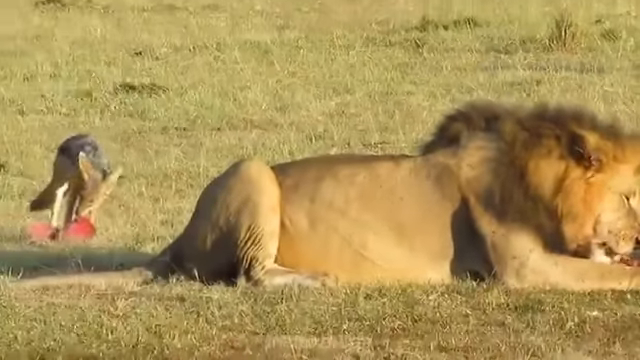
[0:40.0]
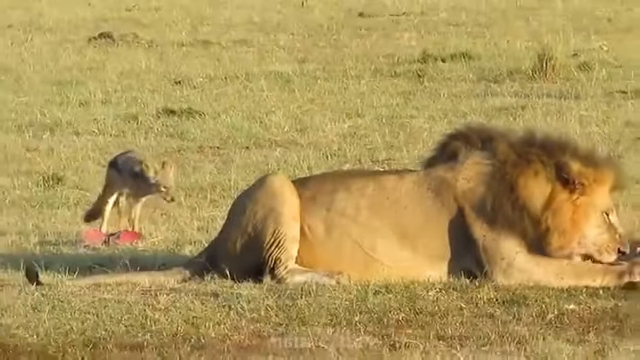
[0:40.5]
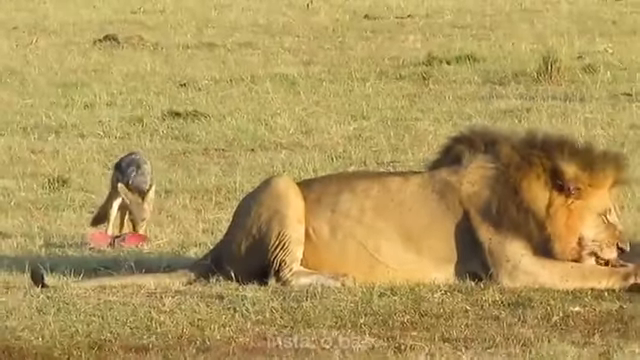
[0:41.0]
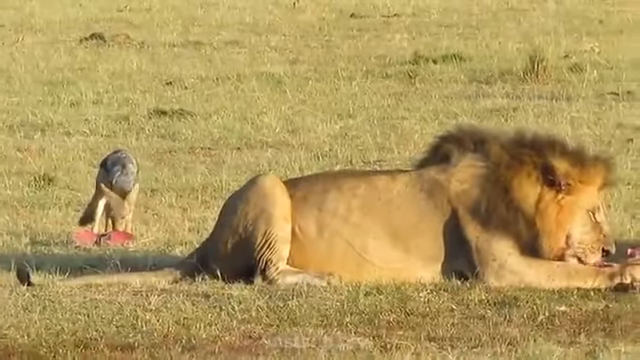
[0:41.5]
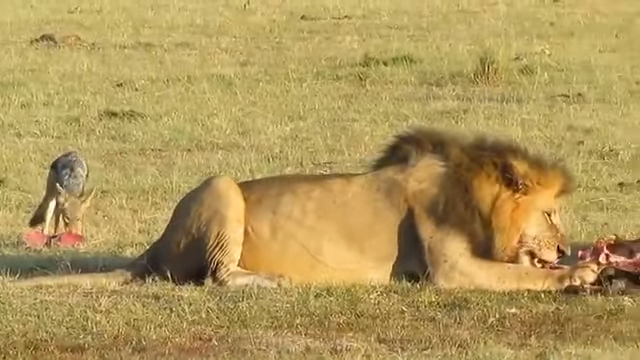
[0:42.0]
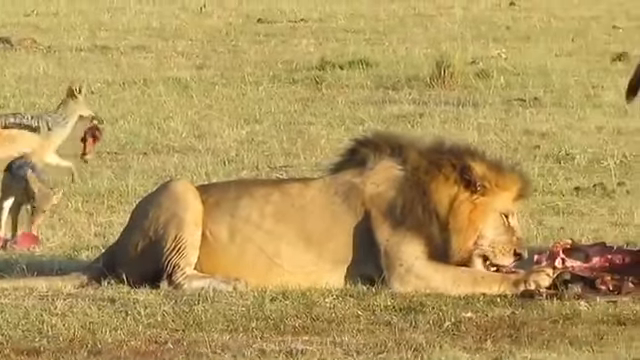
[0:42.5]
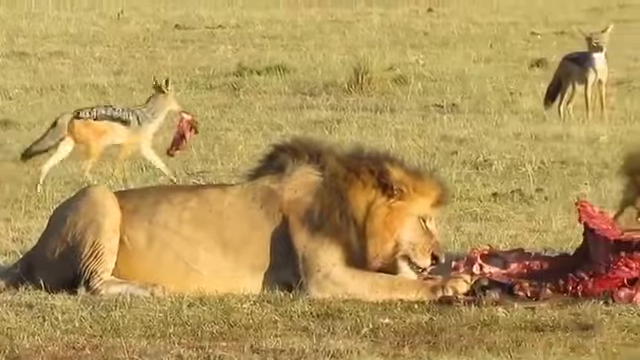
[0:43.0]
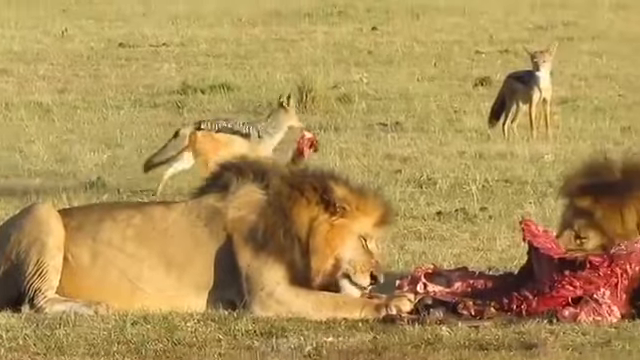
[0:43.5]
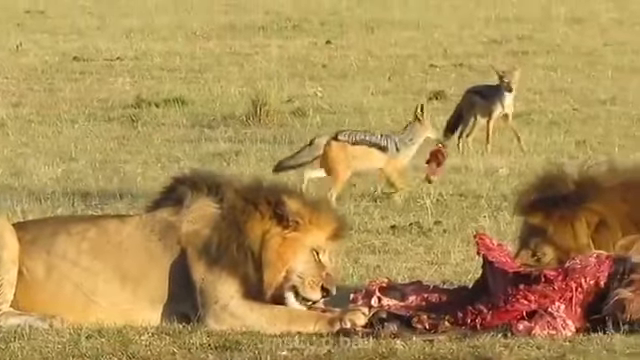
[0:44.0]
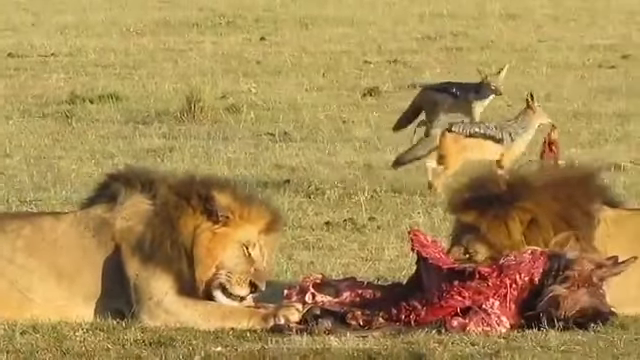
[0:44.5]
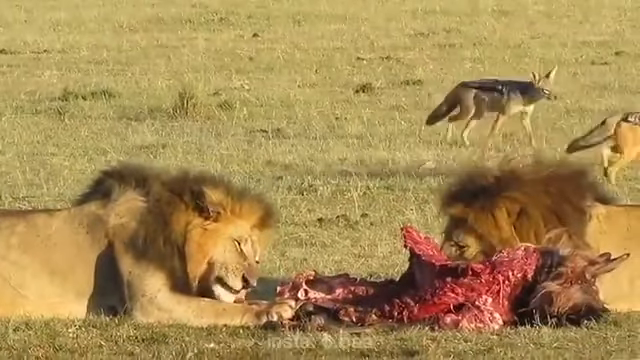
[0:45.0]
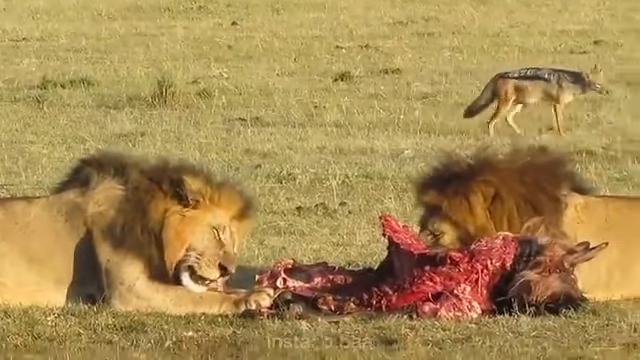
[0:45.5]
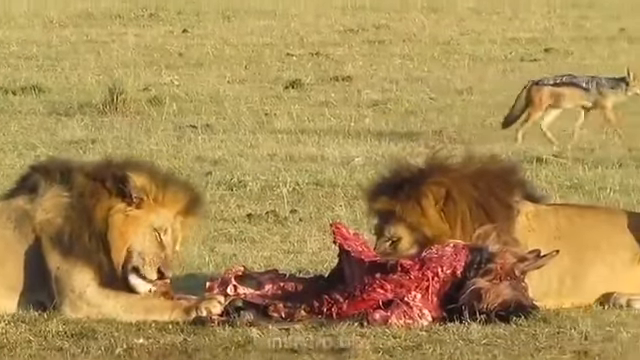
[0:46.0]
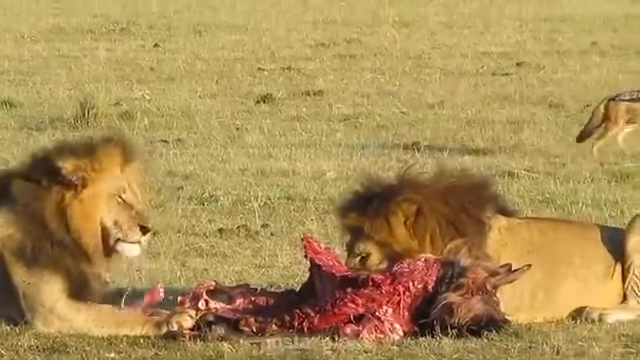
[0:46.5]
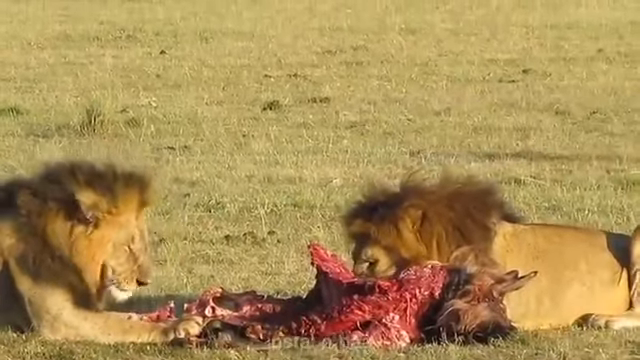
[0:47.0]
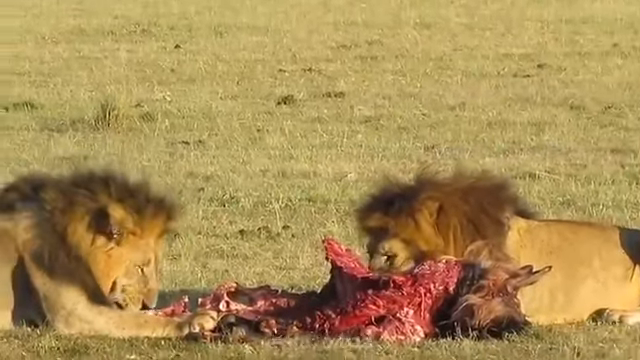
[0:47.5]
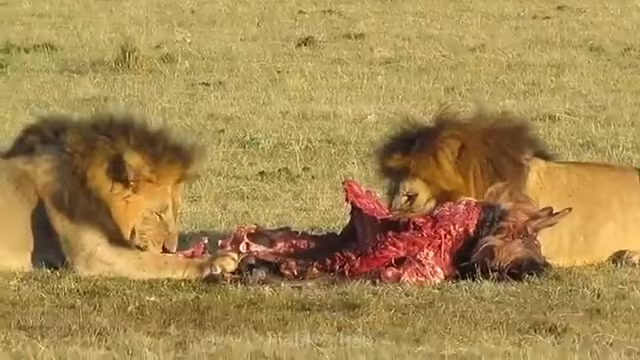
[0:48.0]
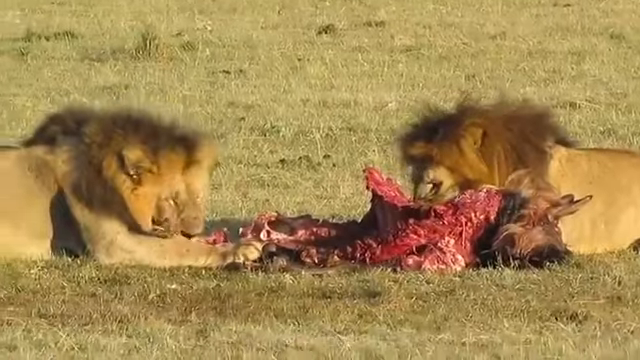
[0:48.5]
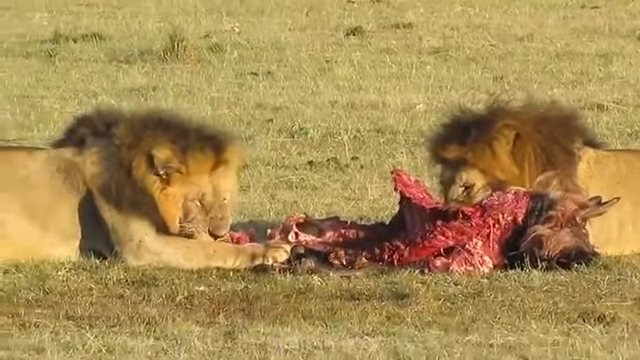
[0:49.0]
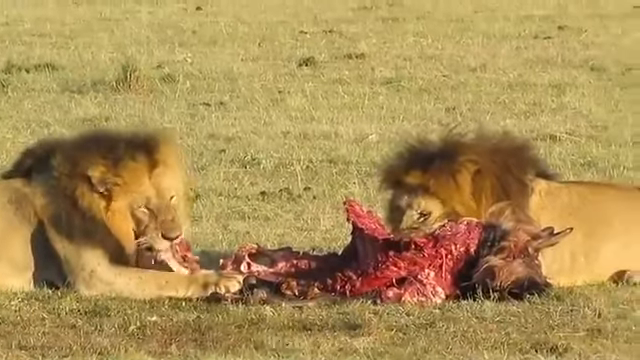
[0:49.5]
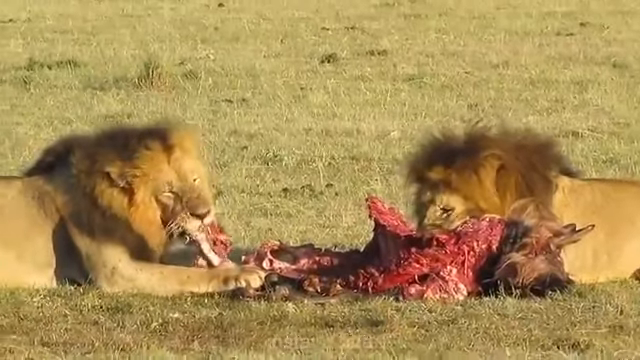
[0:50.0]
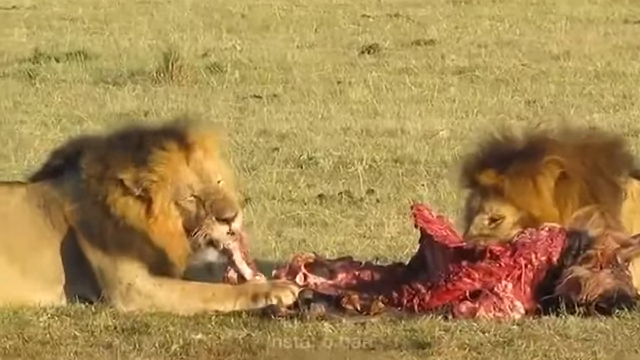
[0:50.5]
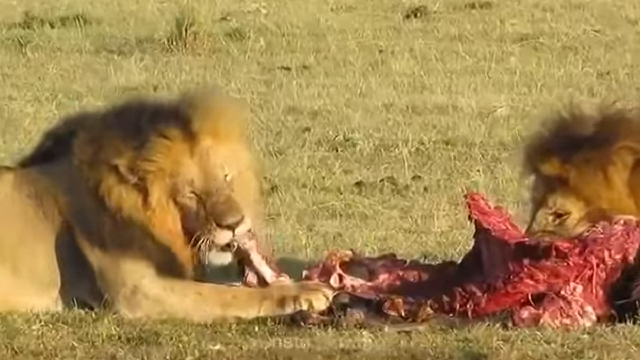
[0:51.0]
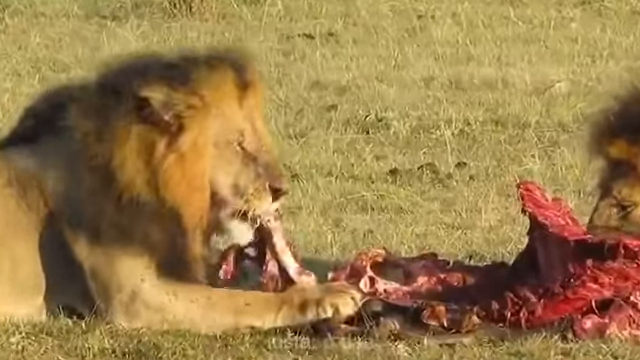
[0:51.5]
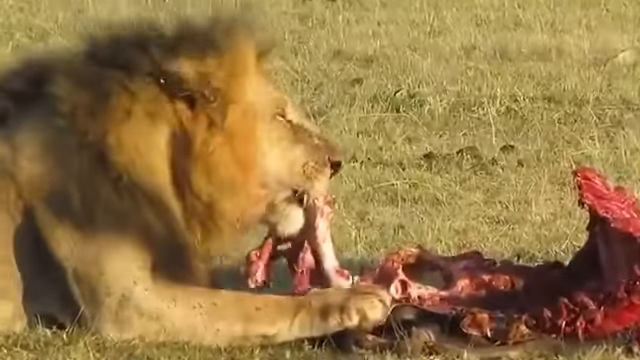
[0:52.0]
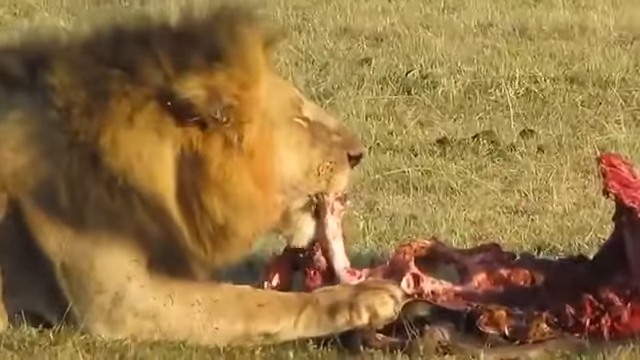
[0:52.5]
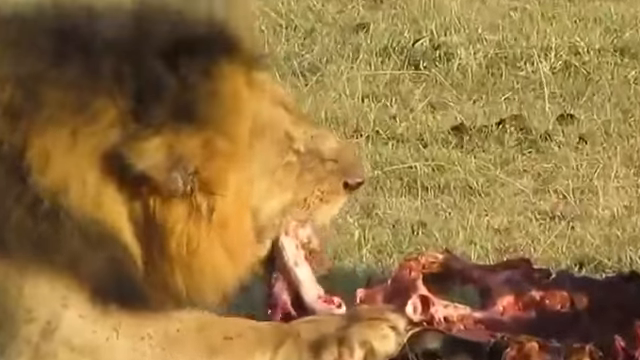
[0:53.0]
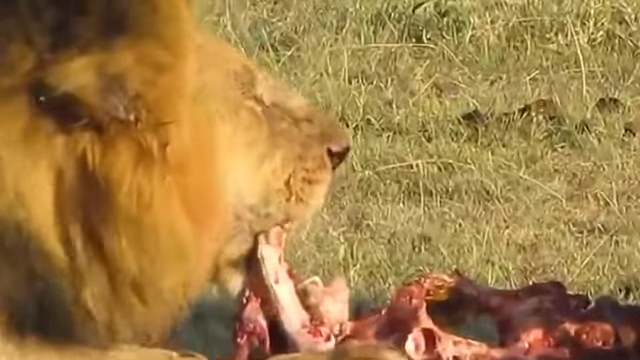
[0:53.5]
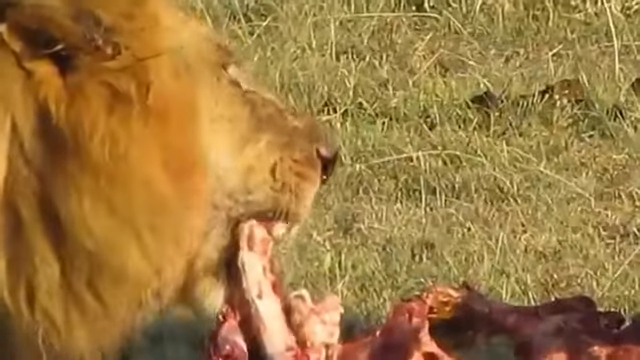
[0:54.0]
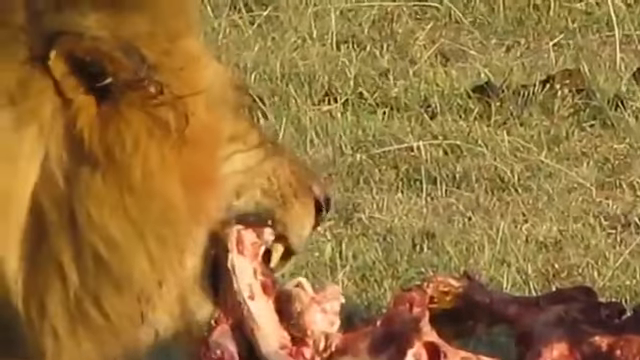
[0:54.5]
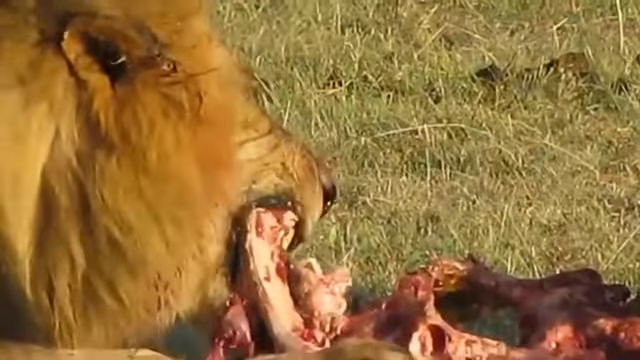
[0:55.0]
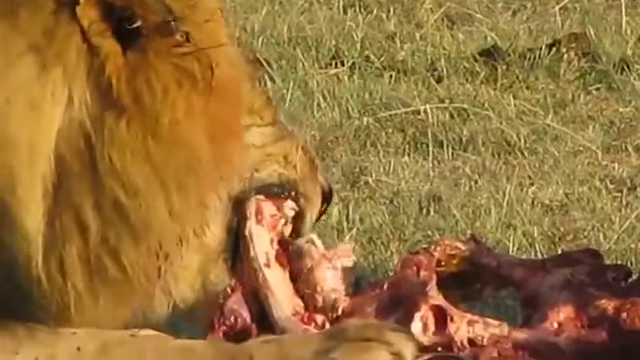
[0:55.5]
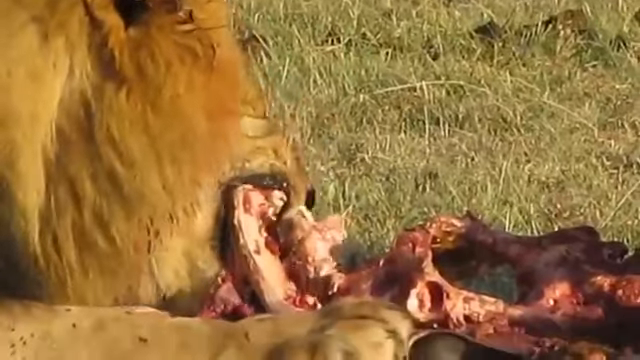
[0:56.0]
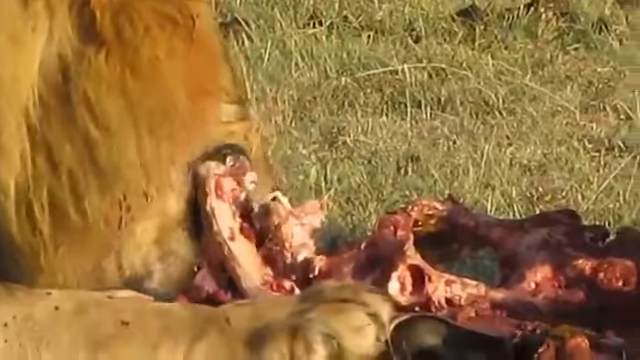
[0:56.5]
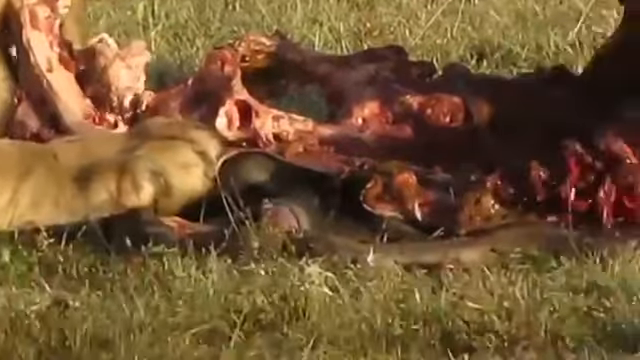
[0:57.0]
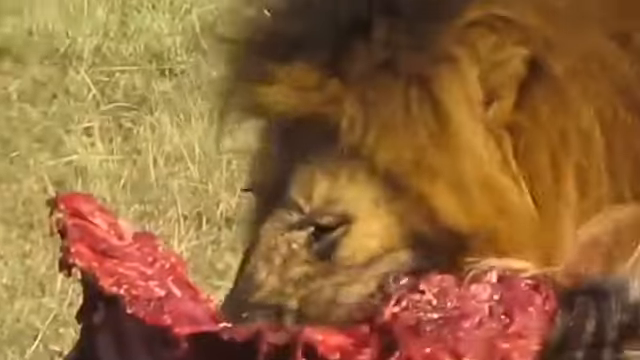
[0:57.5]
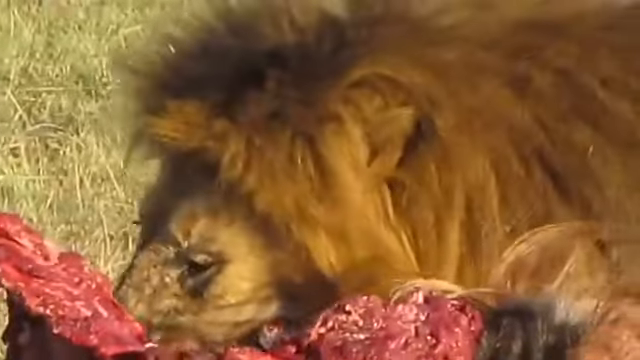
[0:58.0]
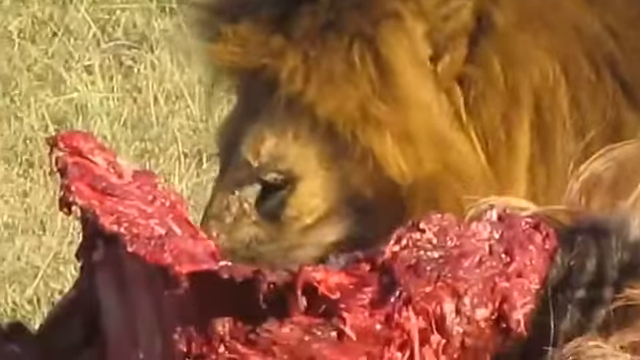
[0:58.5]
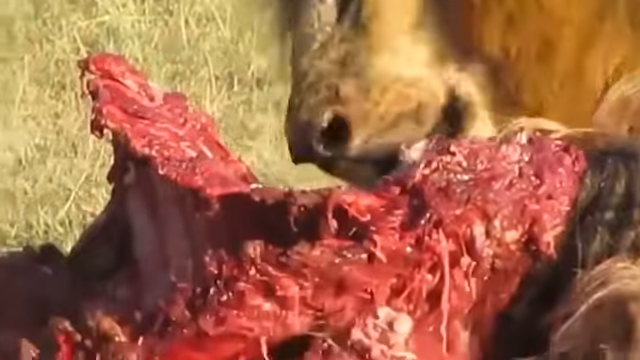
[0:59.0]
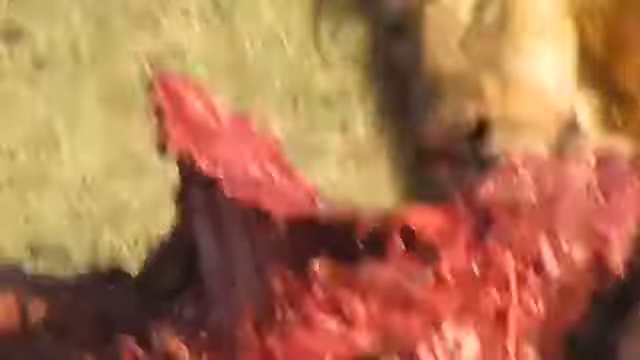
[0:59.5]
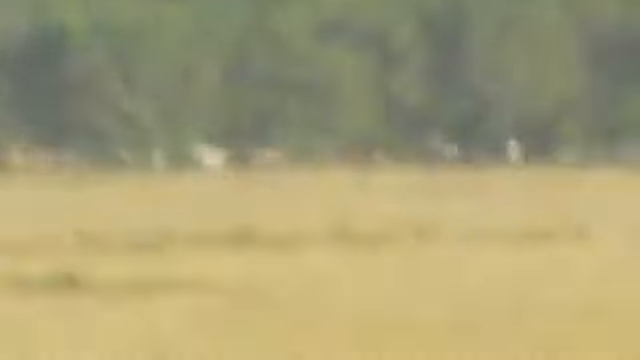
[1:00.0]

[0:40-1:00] Two young male lions feed in the wild on the carcass of some wild animal they had previously caught, in a savannah with short grass surrounding them. Standing close to the lions are two small wild dogs, eagerly trying to get their chance to eat some of the meat. One of the wild dogs is to the left side of a lion with a small piece of meat scrap that it was able to steal from the lions. The same dog runs off with the meat scrap, followed by the second dog. The lions continue to feed on the carcass, the lion on the left holding on to a bone and scraping the meat off it with his sharp teeth, while the second lion is also busy devouring the food. The lions have their eyes closed as they eat, seemingly savouring the meal.